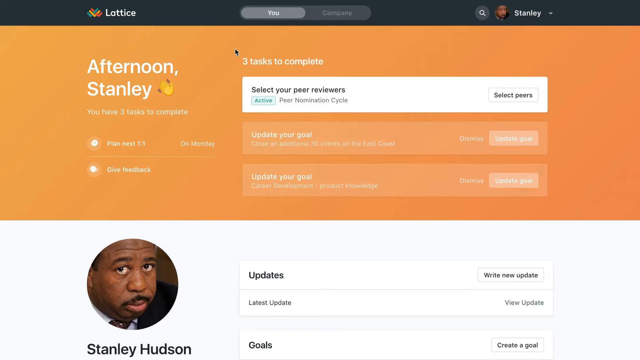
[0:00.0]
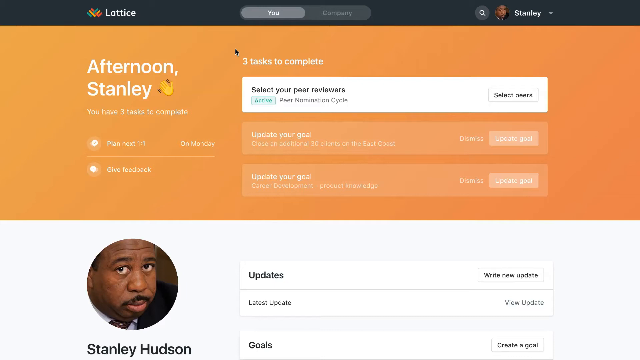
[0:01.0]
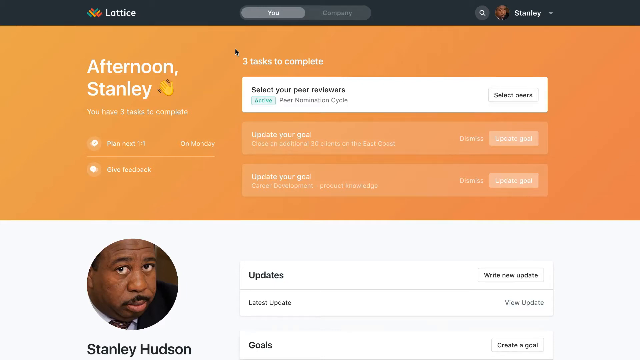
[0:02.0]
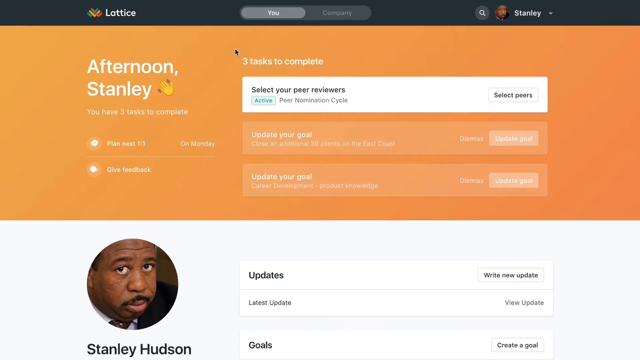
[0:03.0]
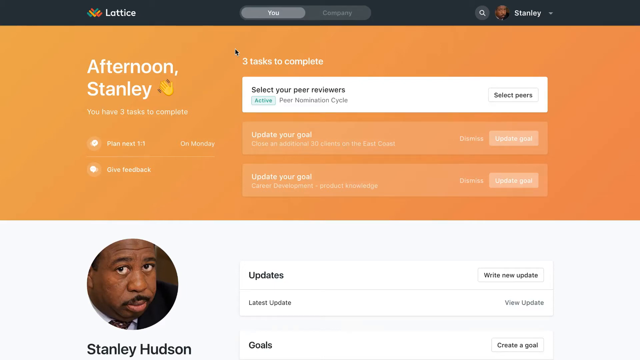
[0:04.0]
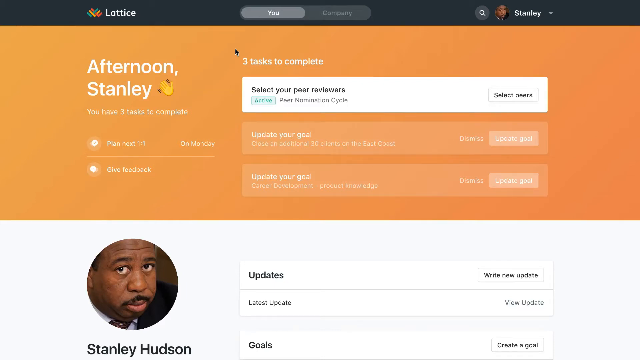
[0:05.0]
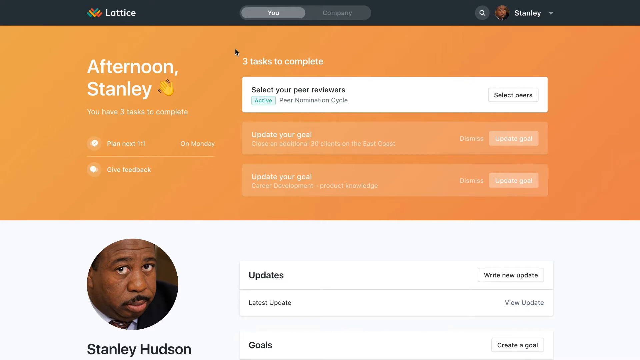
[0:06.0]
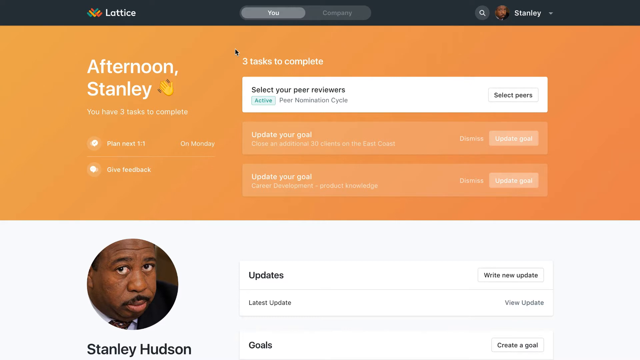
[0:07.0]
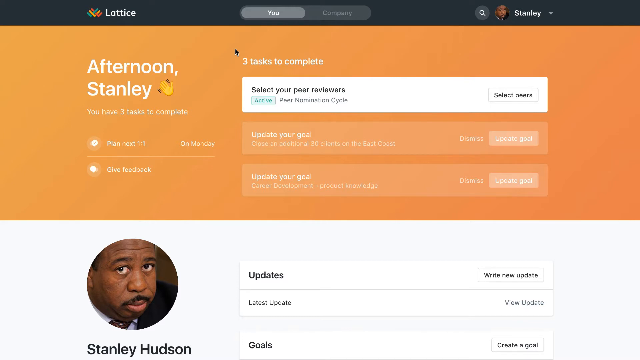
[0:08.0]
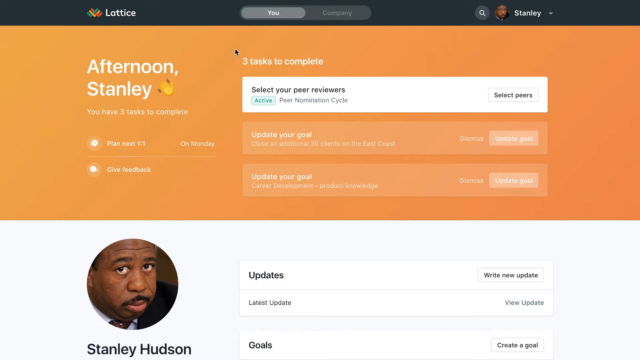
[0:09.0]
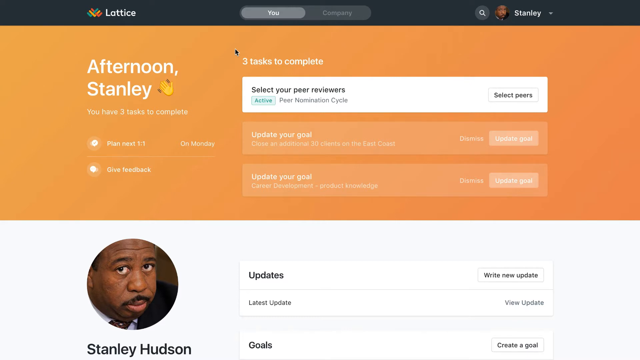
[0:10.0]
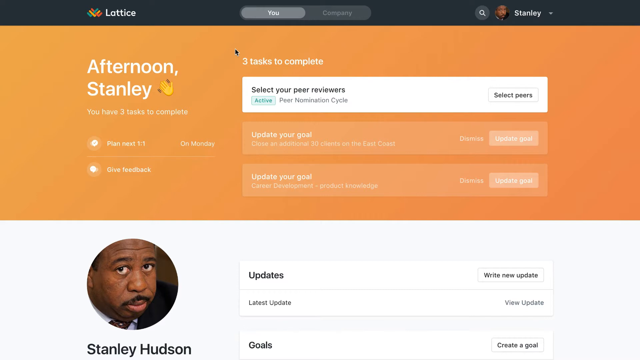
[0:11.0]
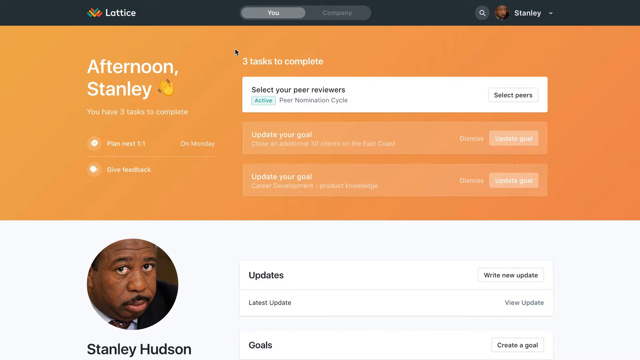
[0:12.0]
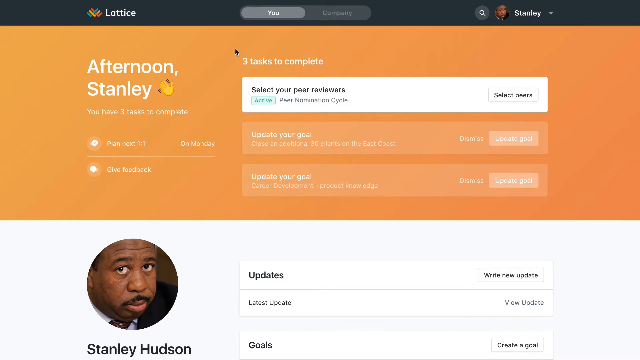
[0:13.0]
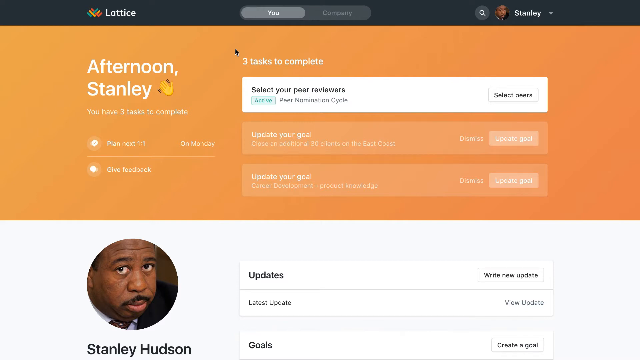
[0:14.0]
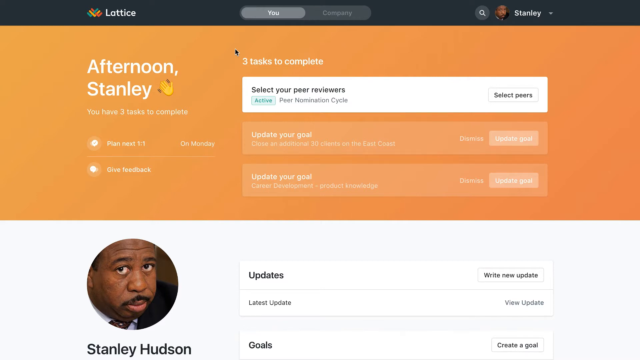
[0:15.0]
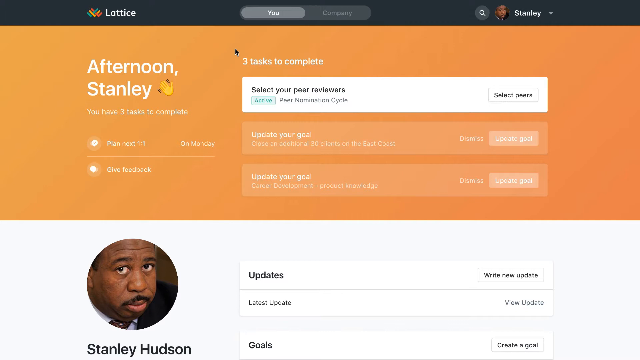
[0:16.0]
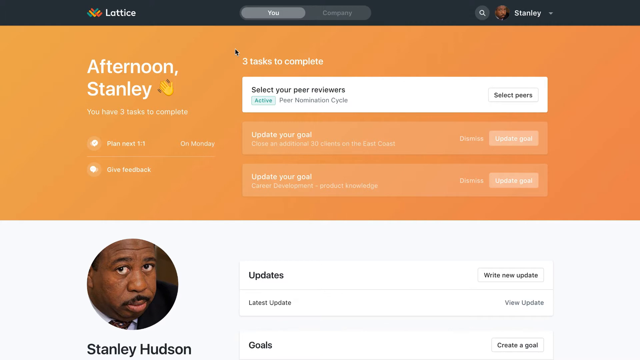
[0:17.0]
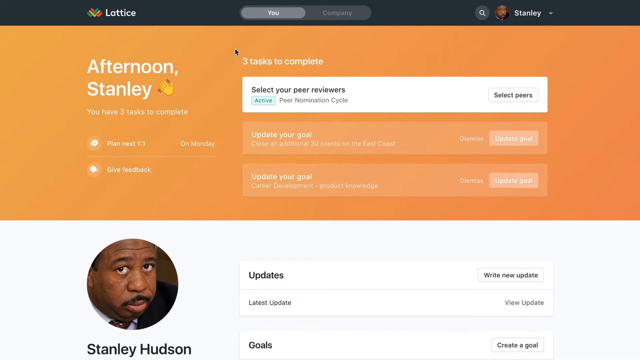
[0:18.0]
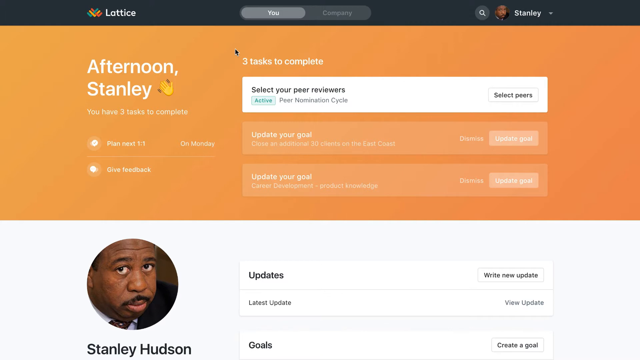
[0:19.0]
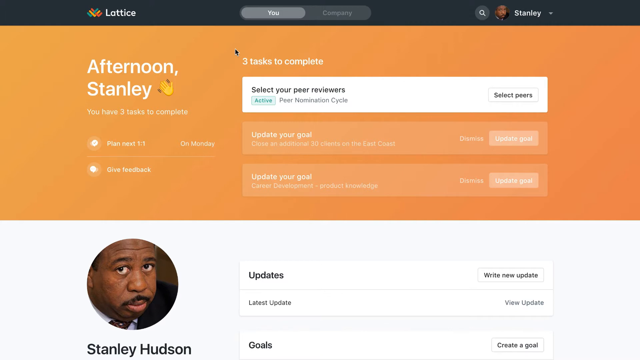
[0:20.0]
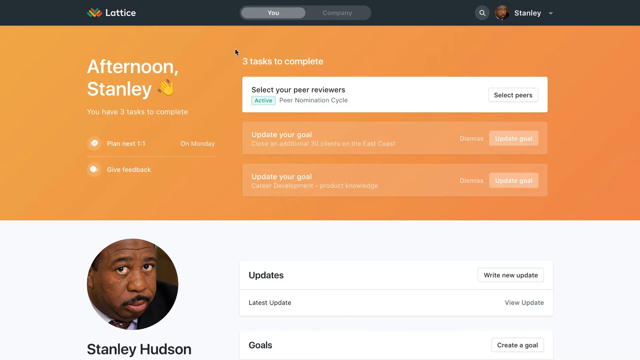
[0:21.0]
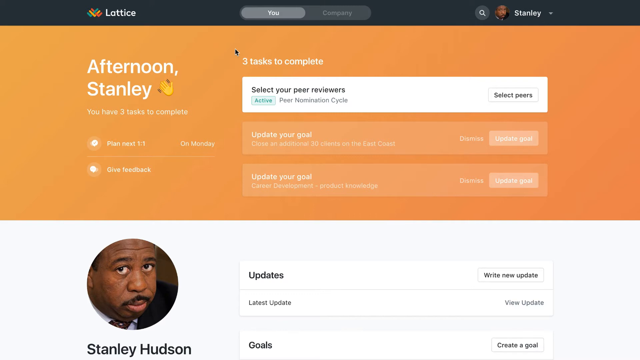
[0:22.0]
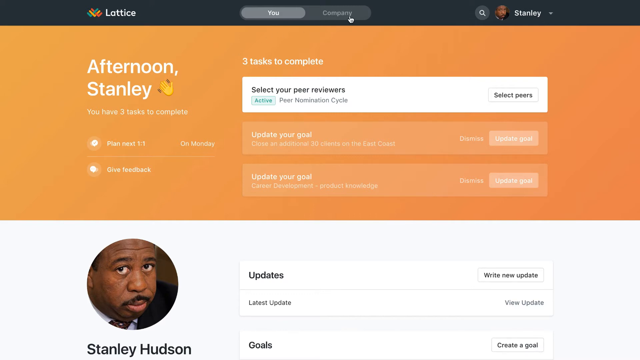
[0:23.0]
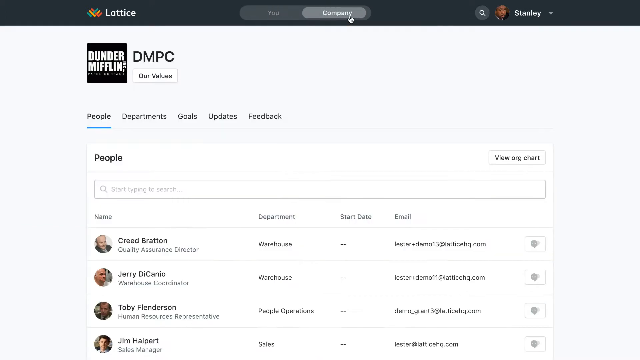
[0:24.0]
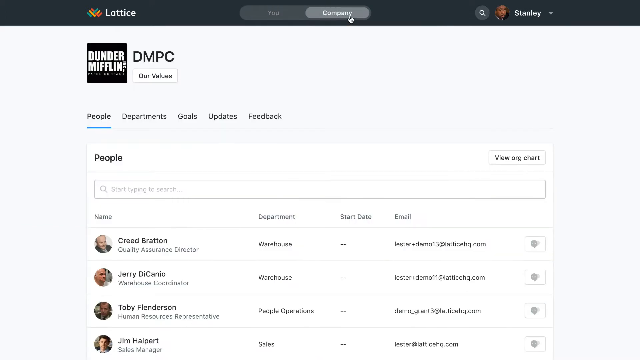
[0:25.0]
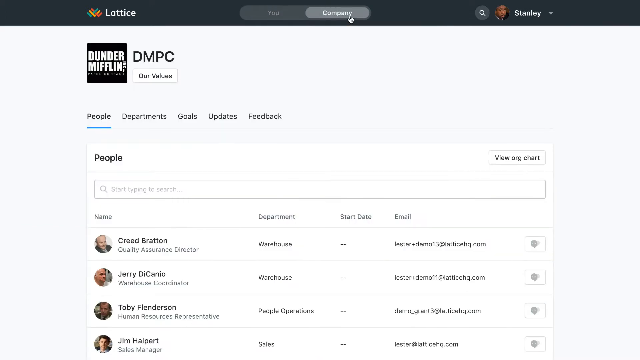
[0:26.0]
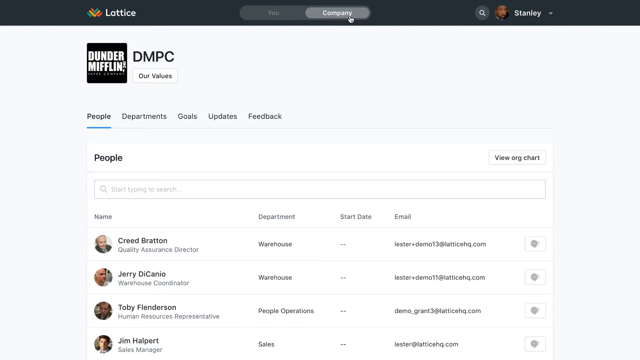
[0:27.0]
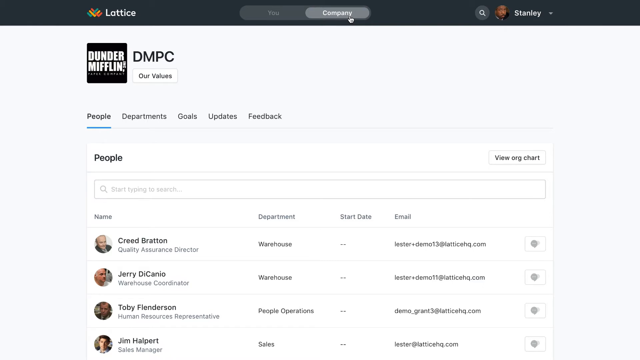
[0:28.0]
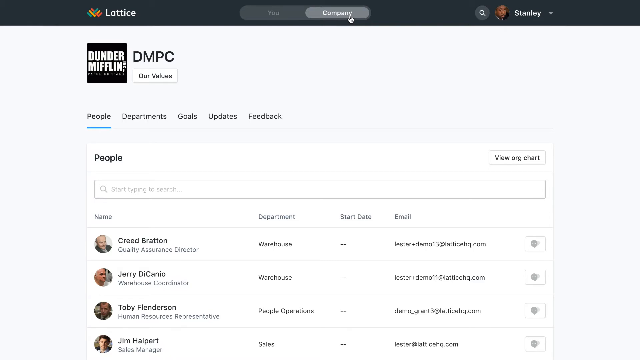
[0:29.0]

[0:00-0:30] The video opens on a website with the text "afternoon, Stanley, you have three tasks to complete," apparently some kind of task management application. In the upper left corner is a logo reading "Lottice," spelled L-O-T-T-I-C-E. At the top is a toggle with two options, "you" and "company," currently set to "you." In the upper right there is a search icon shaped like a magnifying glass, a profile picture of a man who is presumably Stanley, and to the right of the picture the name "Stanley" with a downward-facing arrow for a dropdown menu. On the lower left of the screen the same profile picture appears much larger, with "Stanley Hudson" beneath it. In the middle of the screen, on an orange field, a headline reads "three tasks to complete." The tasks are "select your peer reviewers," "update your goal," and another "update your goal." The "select your peer reviewers" task is currently active.